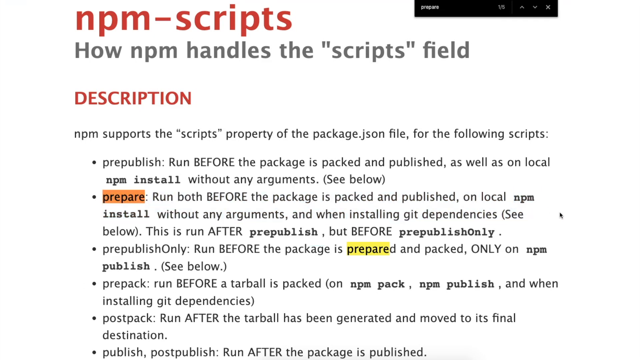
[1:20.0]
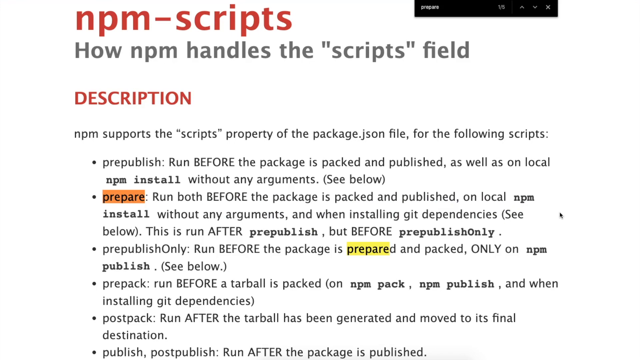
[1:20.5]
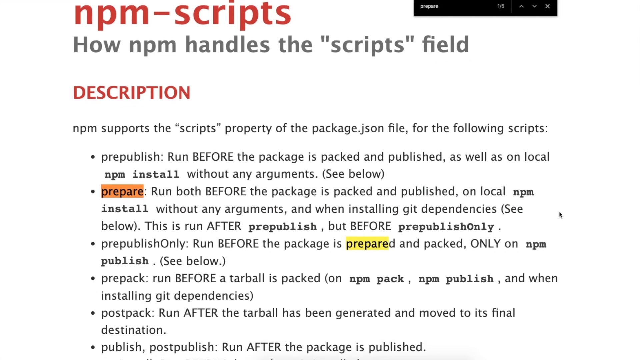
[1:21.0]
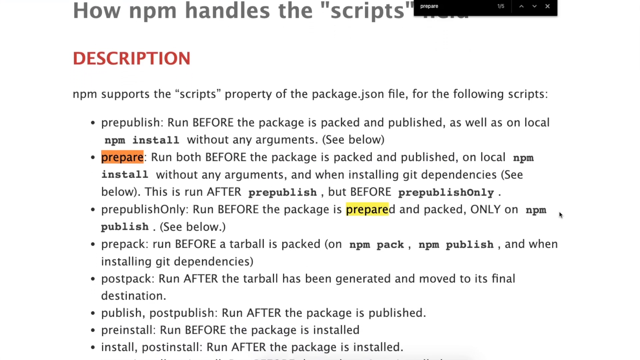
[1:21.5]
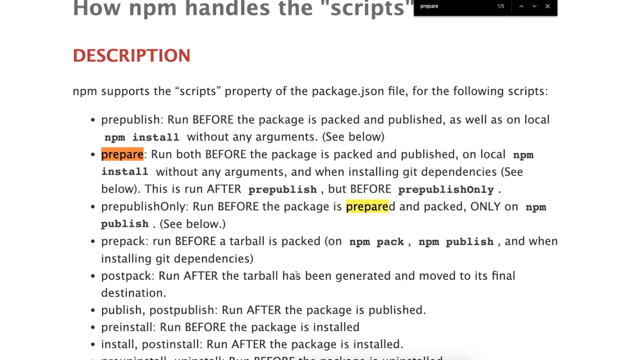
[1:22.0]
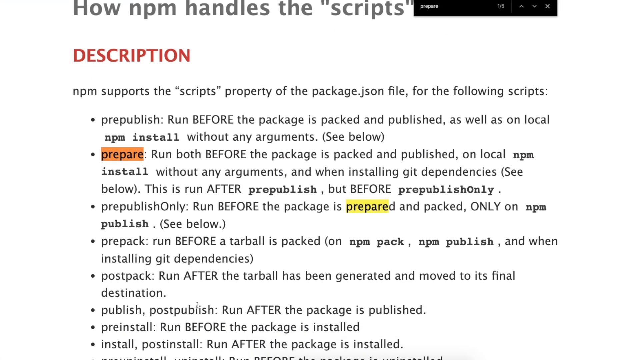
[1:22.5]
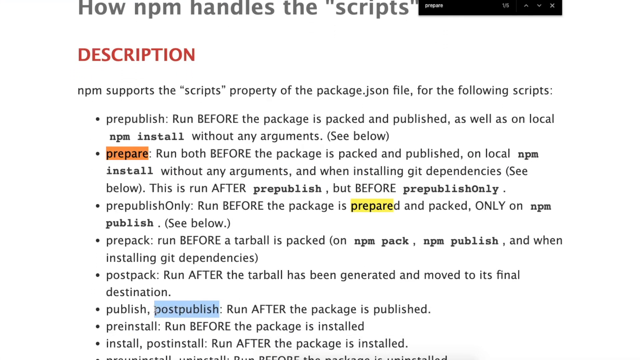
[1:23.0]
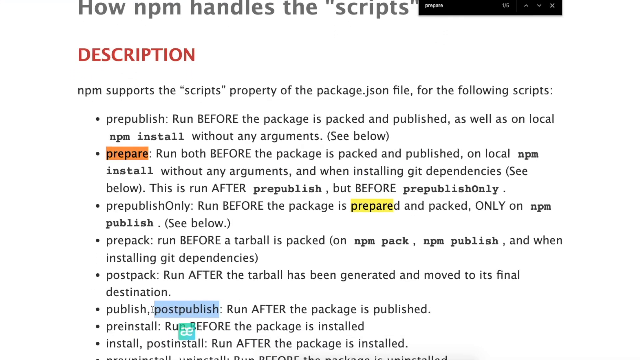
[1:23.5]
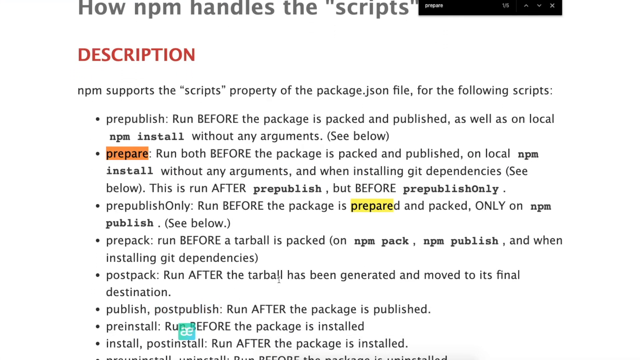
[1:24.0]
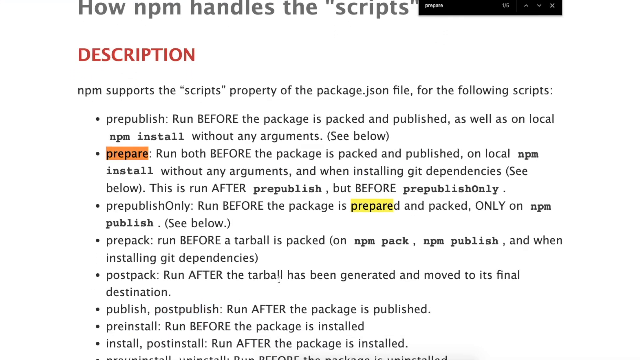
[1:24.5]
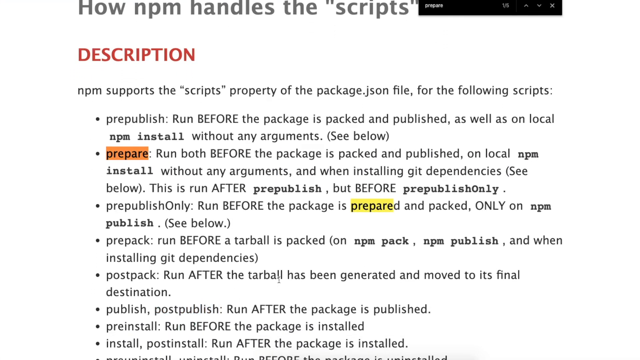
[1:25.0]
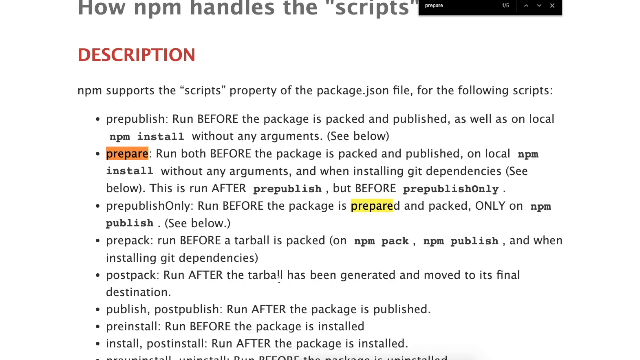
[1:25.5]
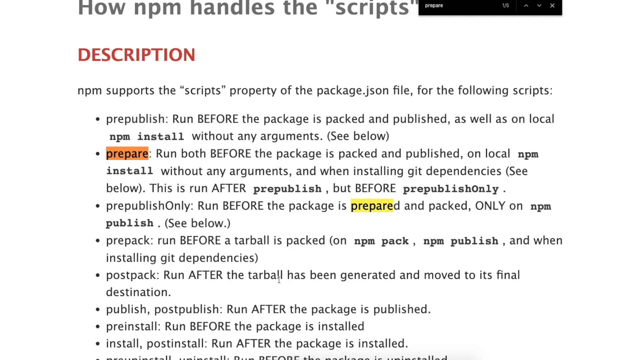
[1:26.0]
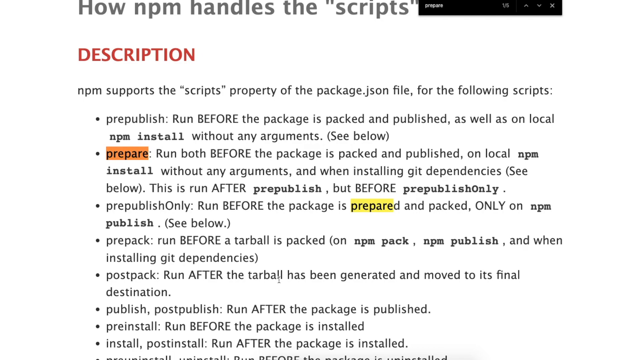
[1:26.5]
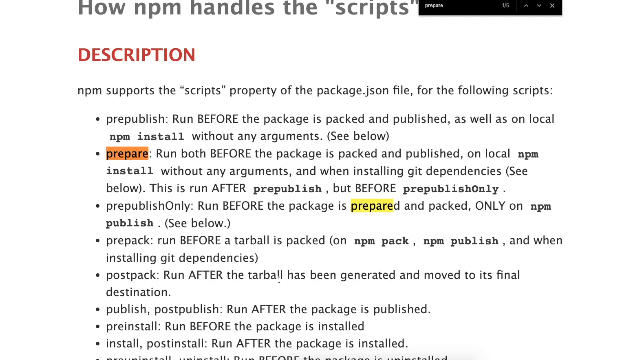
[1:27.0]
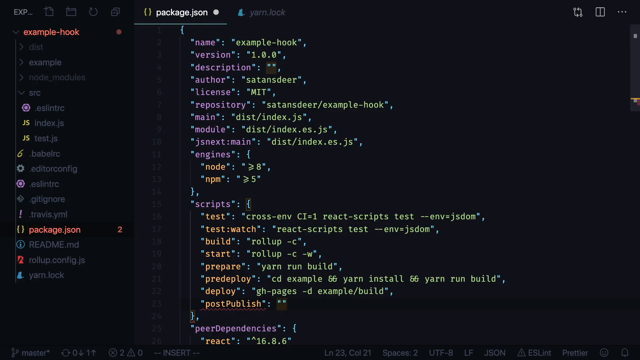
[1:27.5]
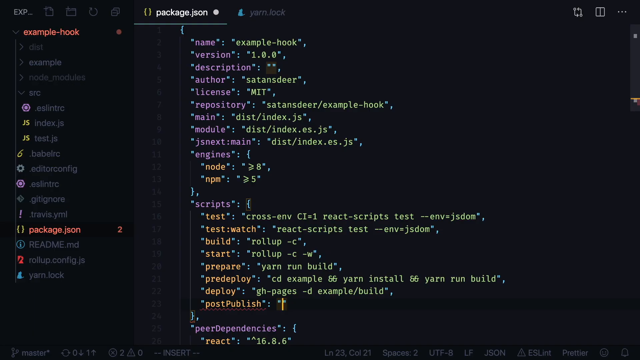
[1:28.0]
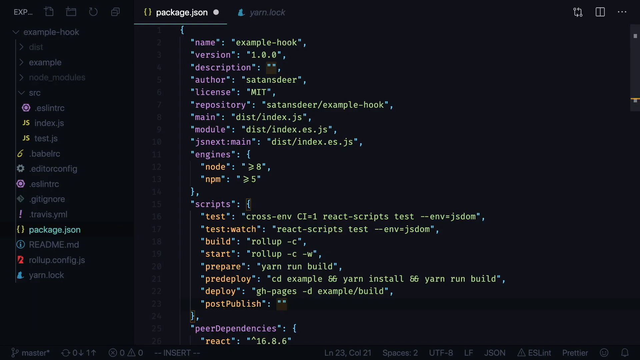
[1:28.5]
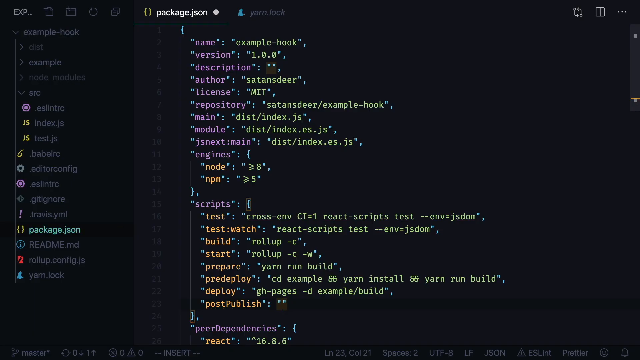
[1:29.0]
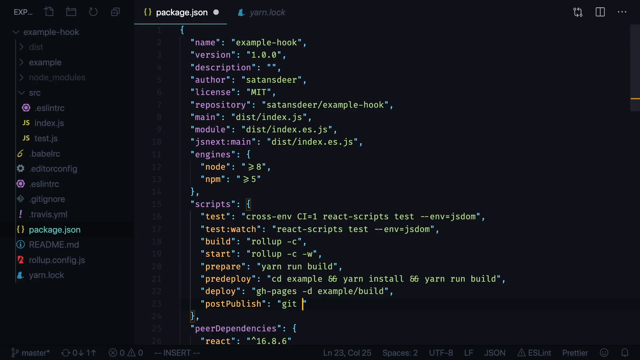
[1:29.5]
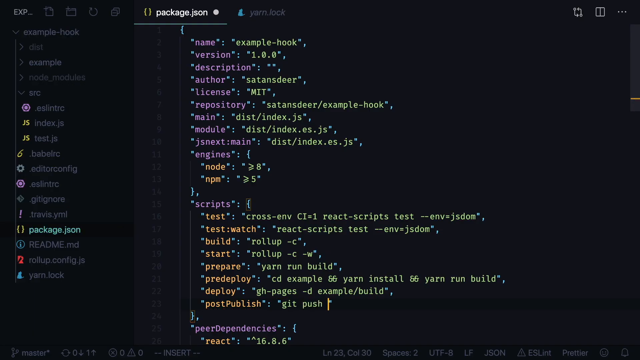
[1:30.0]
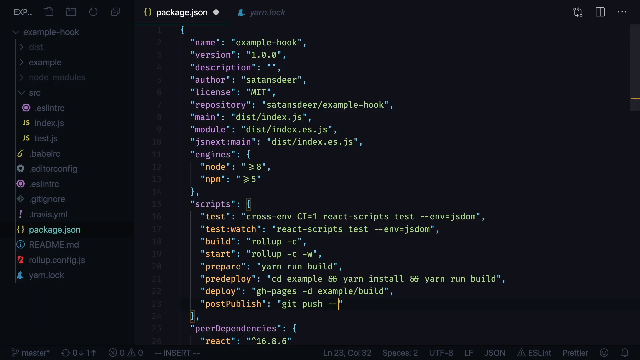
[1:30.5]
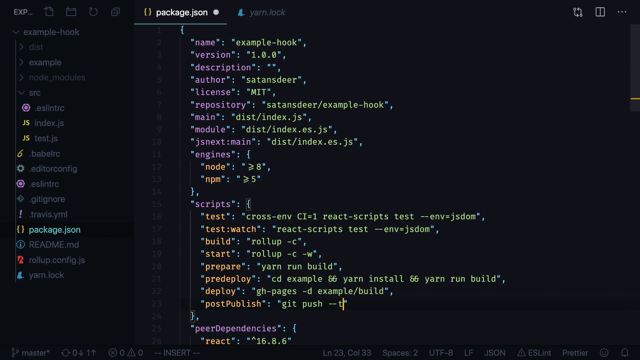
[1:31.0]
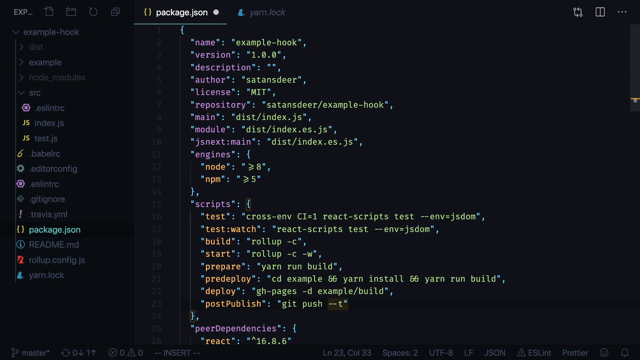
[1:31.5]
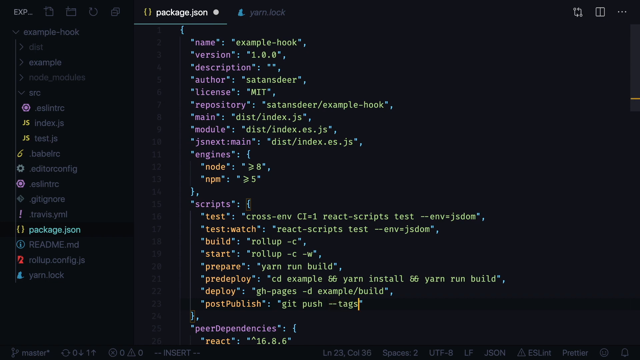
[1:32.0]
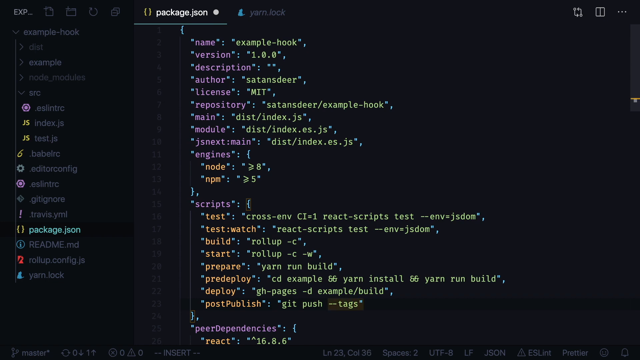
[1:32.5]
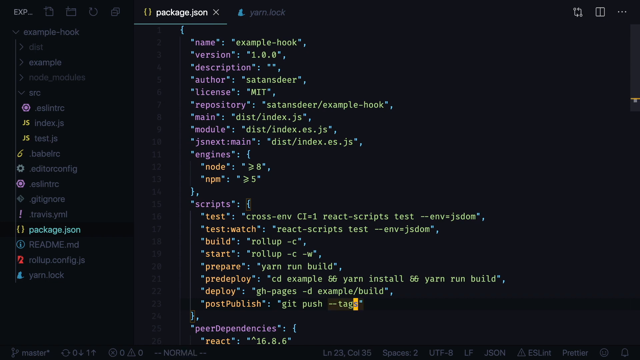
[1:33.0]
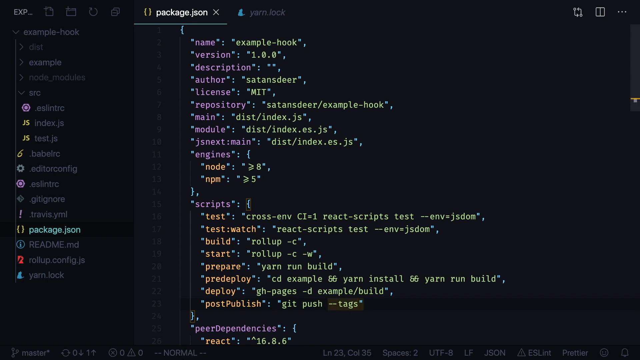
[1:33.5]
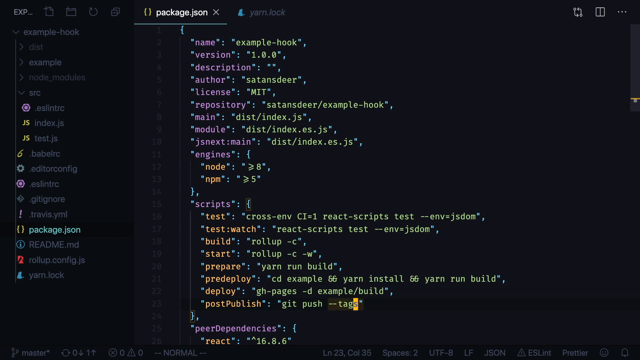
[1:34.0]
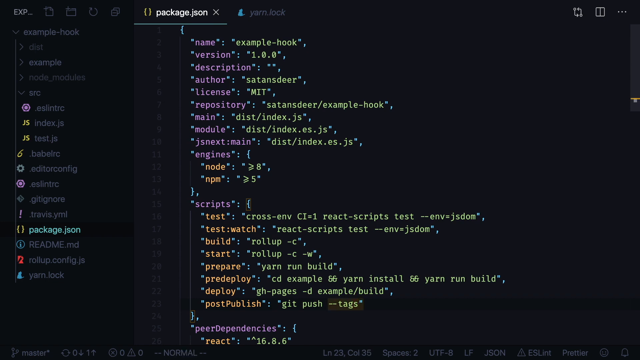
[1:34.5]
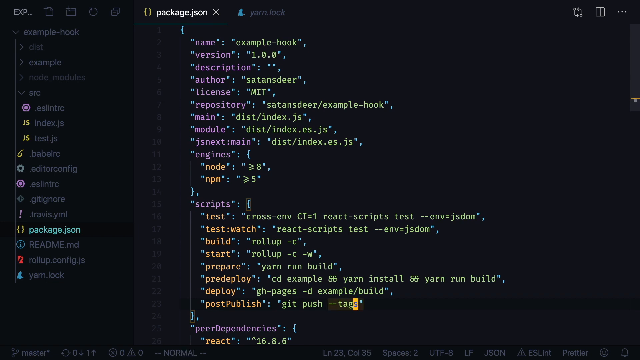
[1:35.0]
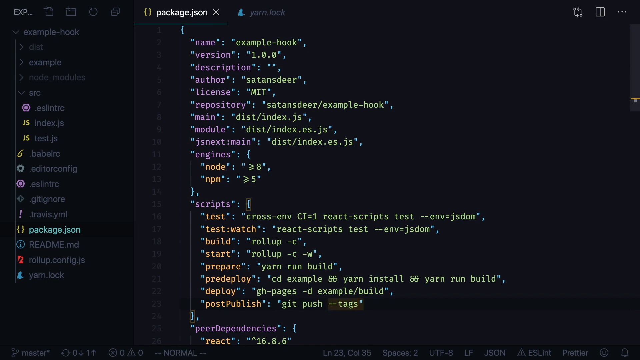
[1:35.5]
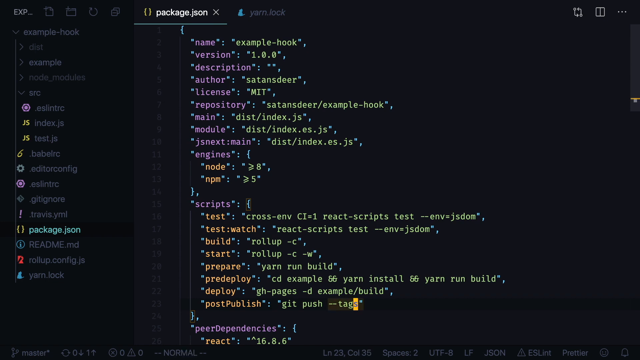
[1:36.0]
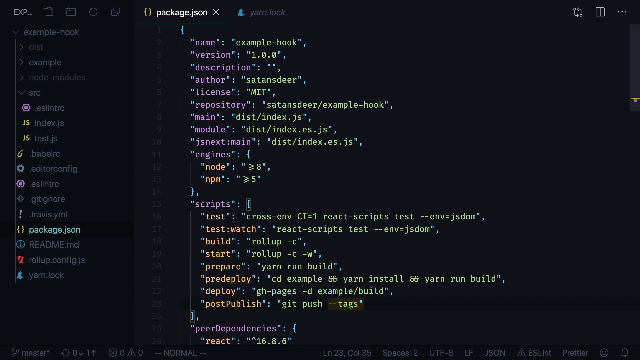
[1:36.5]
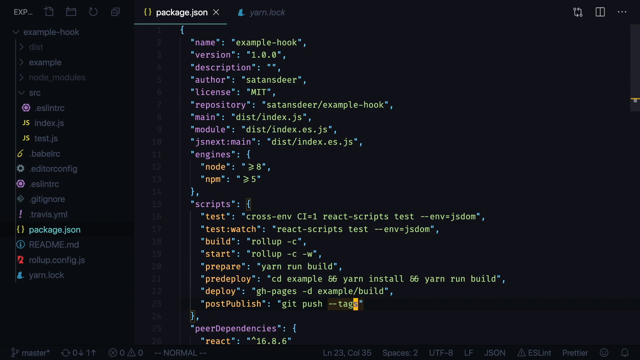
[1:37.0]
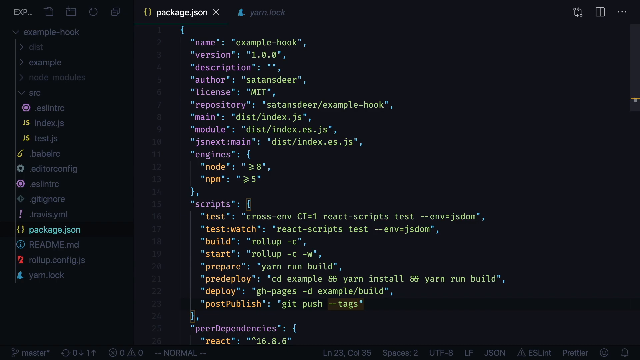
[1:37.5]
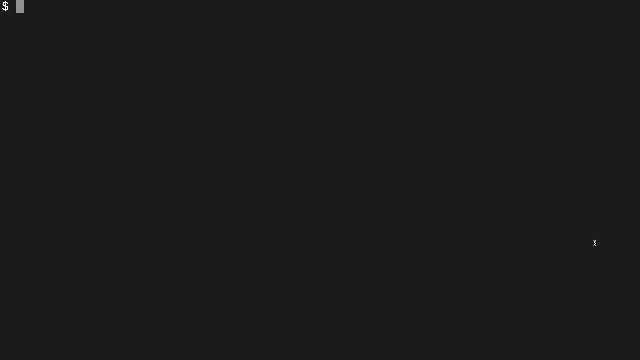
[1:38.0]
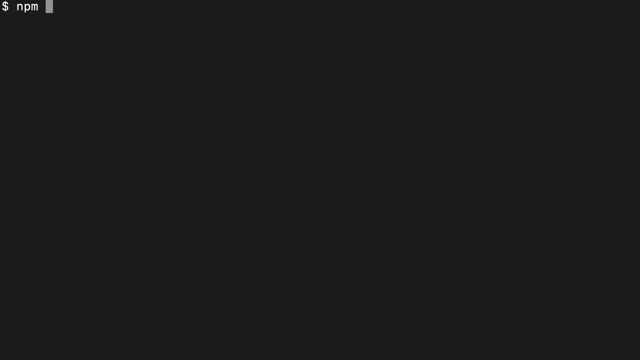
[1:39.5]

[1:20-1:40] The white page remains, with grey text about how npm handles the scripts field, five bullet points below, and the red title at the start reading "NPM Script". The user scrolls down to reveal three more bullet points in black text. Bullet 6 reads "publish, post-publish, run after the package is published", bullet 7 reads "pre-install, run before the package is installed", and bullet 8 reads "install, post-install, run after the package is installed". The user highlights the word "post-publish" in bullet 6 in blue, then clicks off and it goes back to white. The video returns to the code page with the black sidebar of grey text in the drop-down menu and the purple, green and orange code displayed vertically under the white title "package.json". Towards the bottom of the page, under the orange text "post-publish", the user types in green text "git push --tags", and the cursor flashes yellow on and off on the s of "tags" where the user stopped typing. The video then cuts to a completely black screen with a white dollar sign in the top left corner, and the user starts to type.